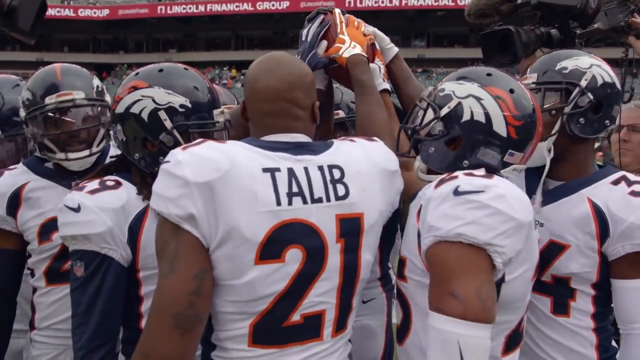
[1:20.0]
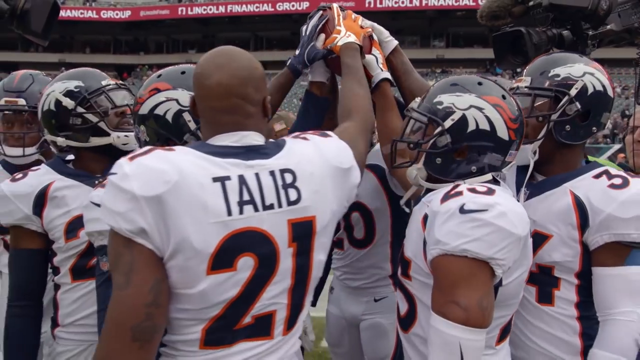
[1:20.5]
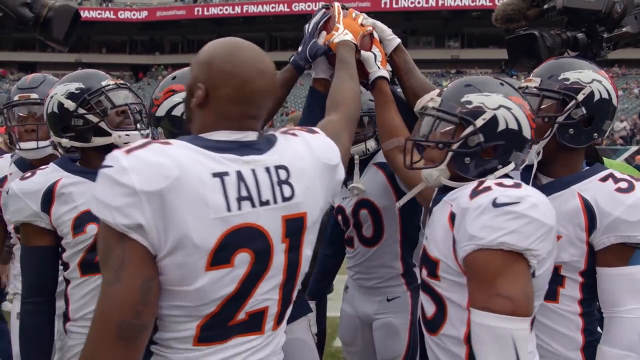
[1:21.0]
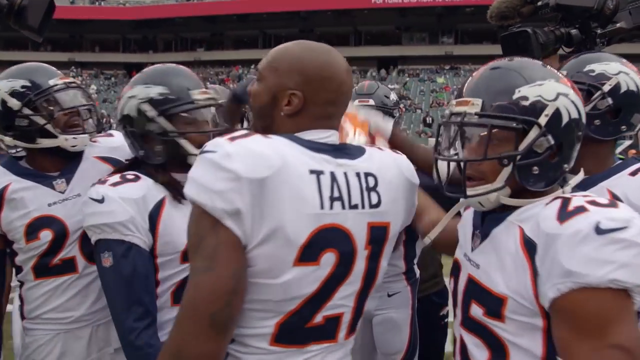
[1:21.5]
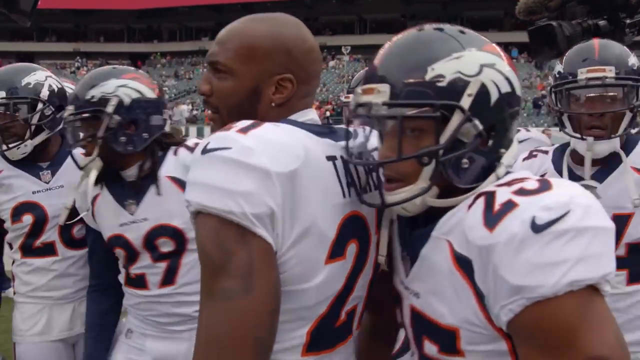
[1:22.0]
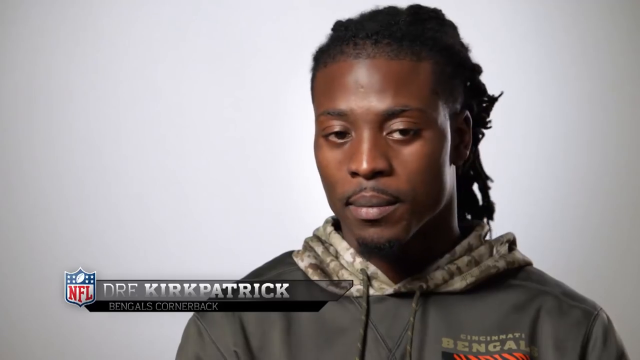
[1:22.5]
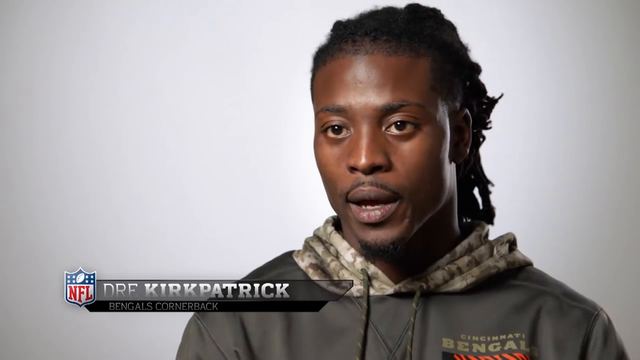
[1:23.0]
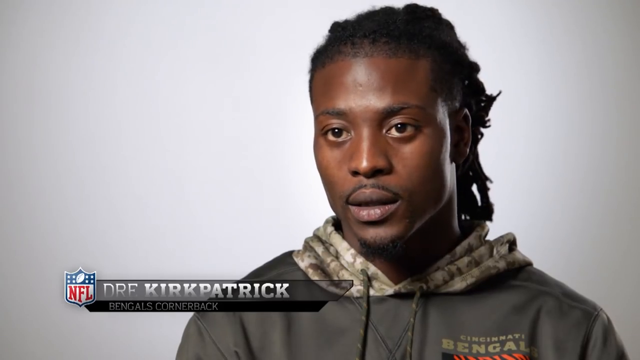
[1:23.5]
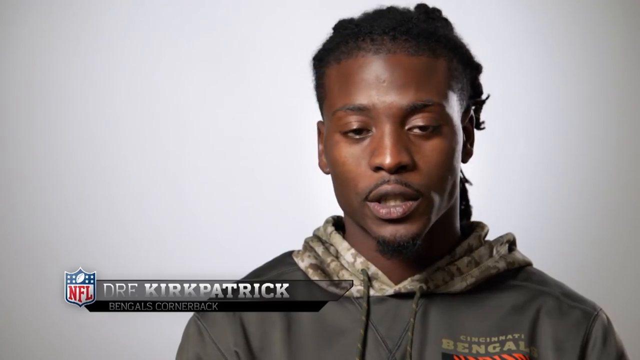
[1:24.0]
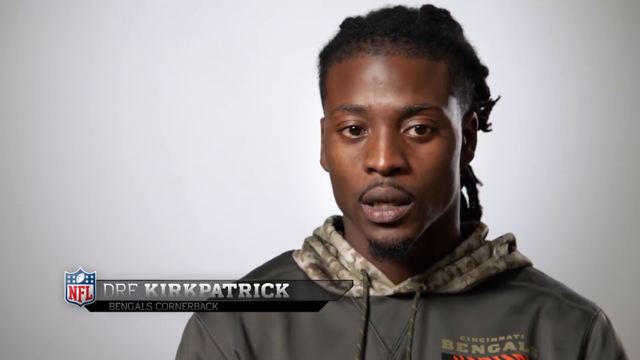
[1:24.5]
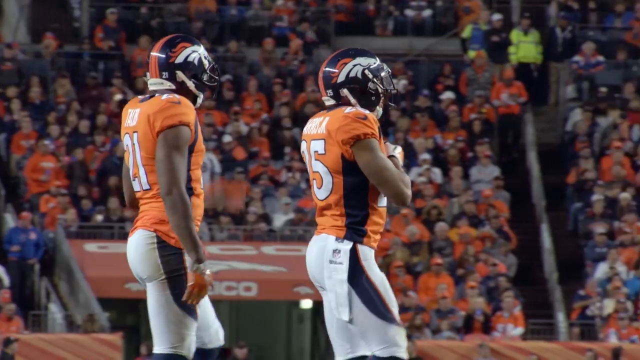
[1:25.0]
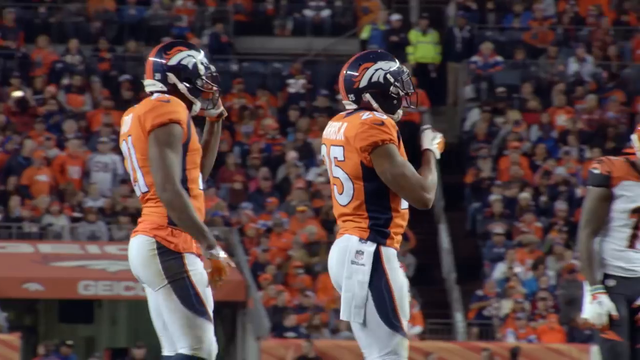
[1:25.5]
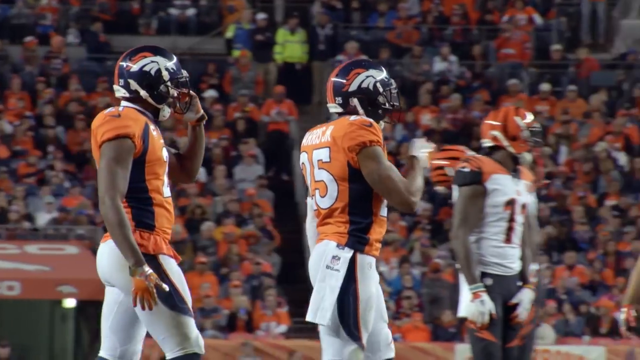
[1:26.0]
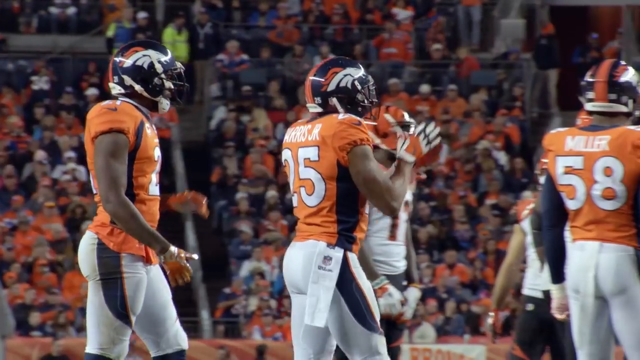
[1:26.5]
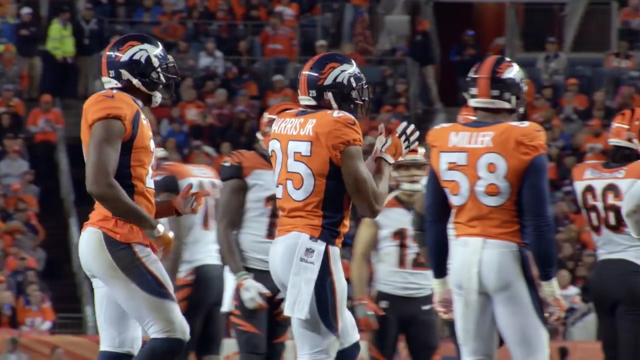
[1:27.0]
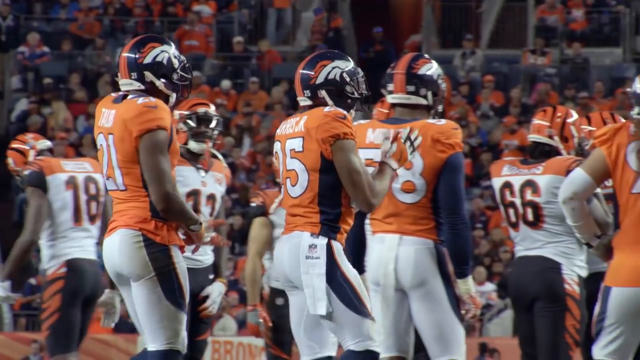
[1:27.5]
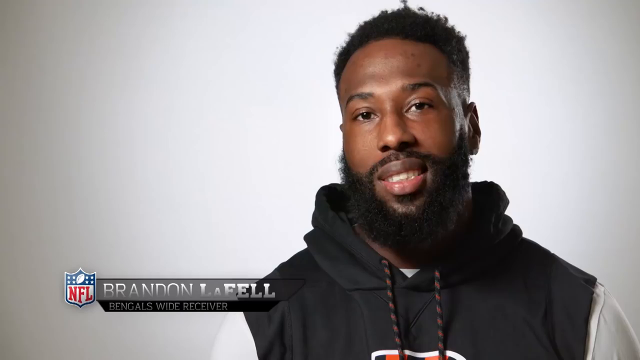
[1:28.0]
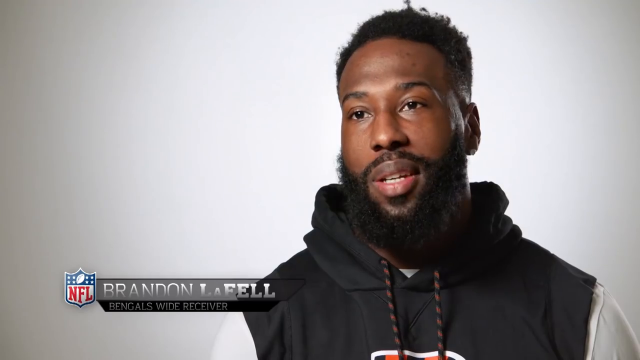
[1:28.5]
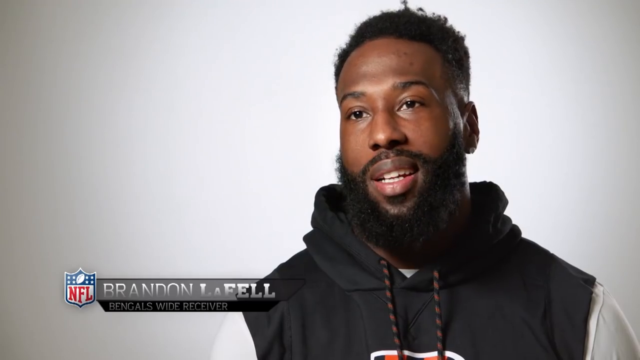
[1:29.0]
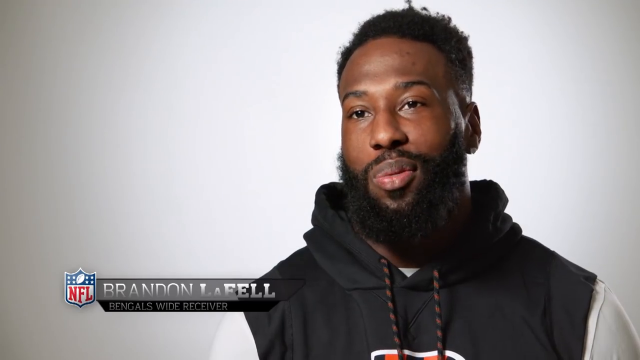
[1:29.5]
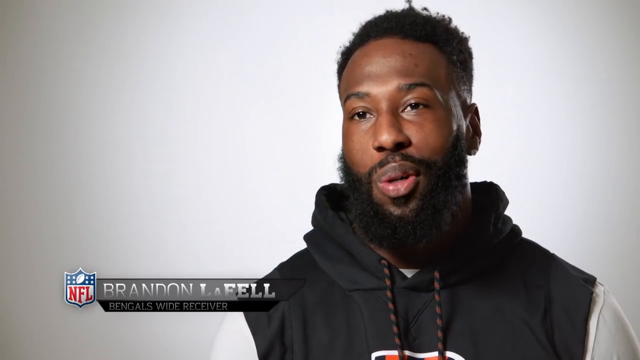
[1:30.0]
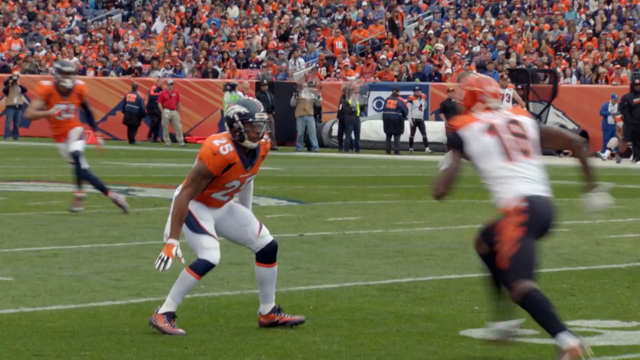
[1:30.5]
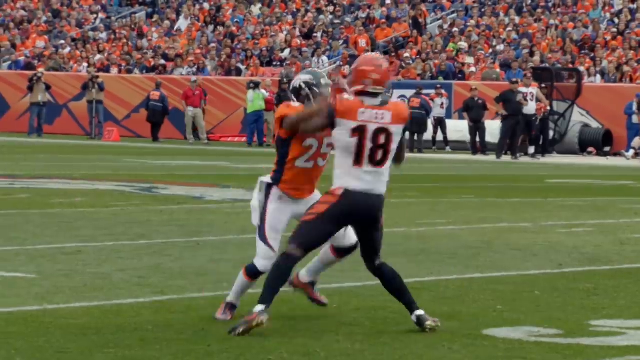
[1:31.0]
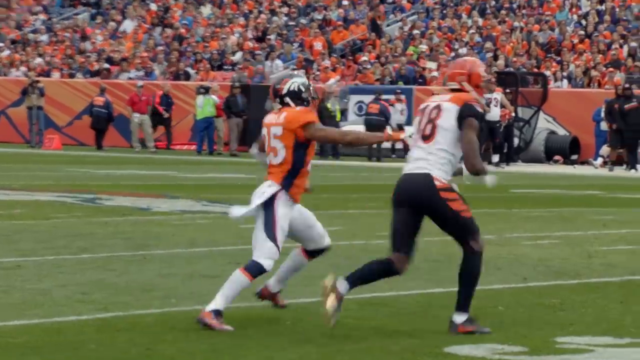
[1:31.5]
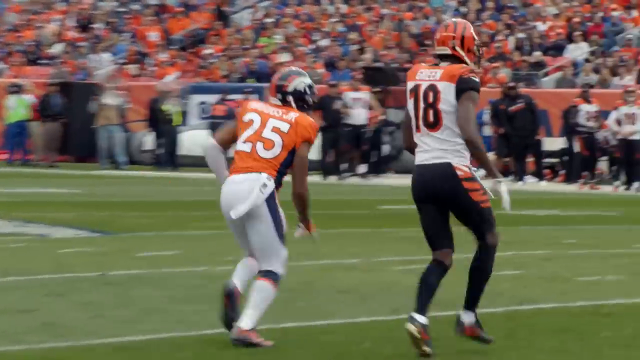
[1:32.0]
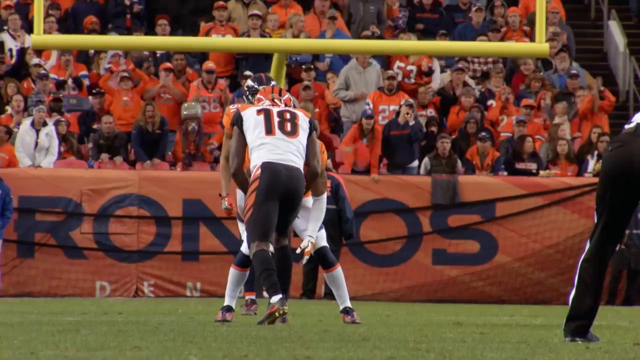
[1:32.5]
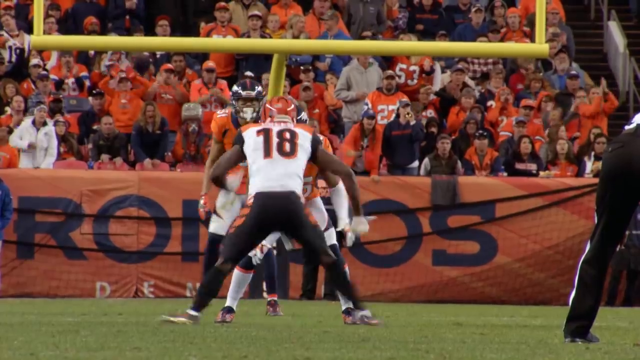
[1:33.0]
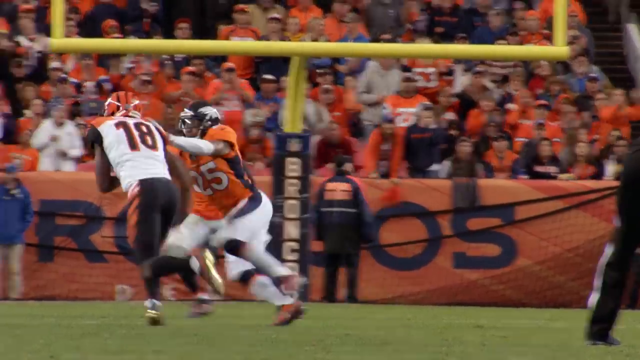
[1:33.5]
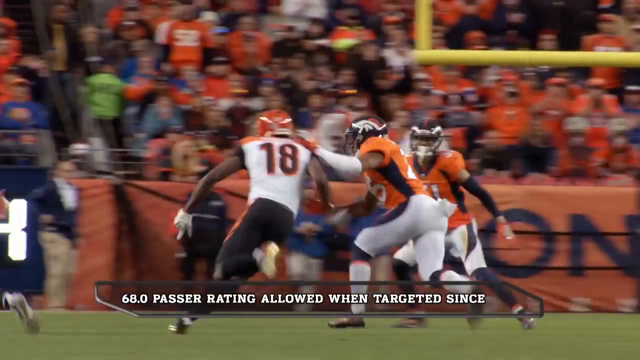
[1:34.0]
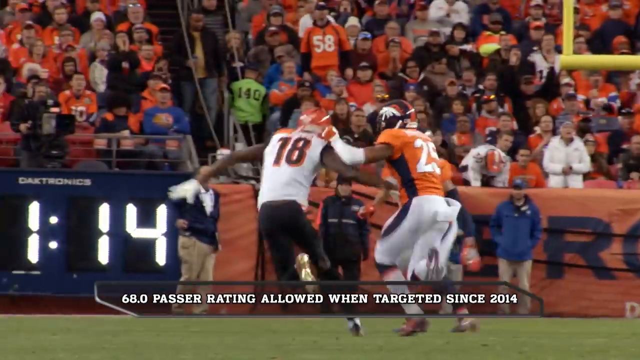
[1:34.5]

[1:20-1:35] Dre Kirkpatrick appears on screen, with text reading "Dre Kirkpatrick" and "Bengals cornerback" and the NFL logo to the left. He is a Black man whose hair is tied back and looks longer, with a little hair on his chin and a thin mustache, wearing a Cincinnati Bengals hoodie with a camo hood. He talks into the camera, presumably about Chris Harris Jr. The video cuts to footage of Harris Jr. walking on the field, then to Brandon LaFell, with "Brandon LaFell" and "Bengals wide receiver" on screen. He is also a Black man, with a bit of an afro and a bushy black beard, wearing a hoodie with the sleeves cut off over a white shirt, and he talks to the camera. More game footage of Harris Jr. follows, and in one shot of him on the field the text reads "68.0 passer rating allowed when targeted since 2014", apparently stats on Chris Harris Jr.